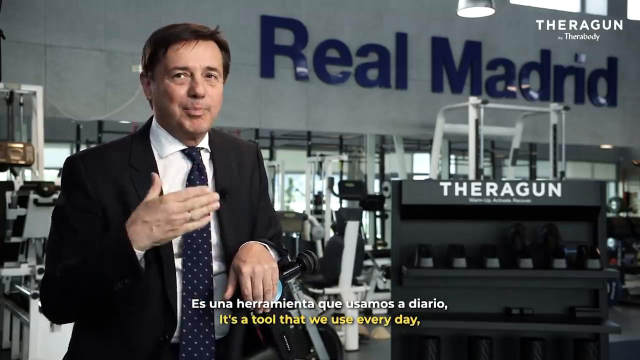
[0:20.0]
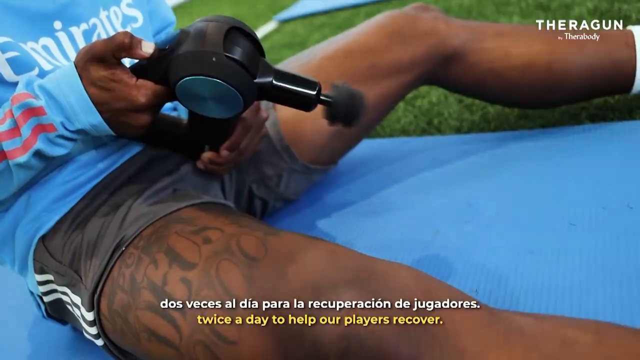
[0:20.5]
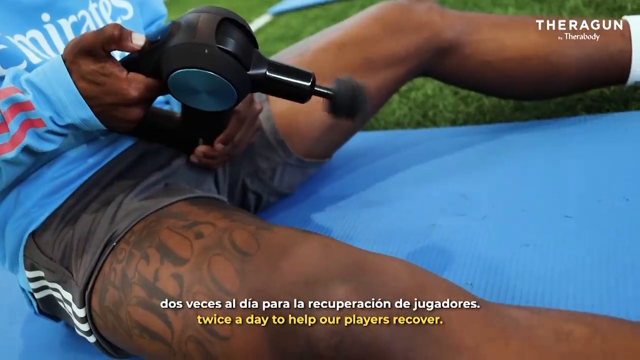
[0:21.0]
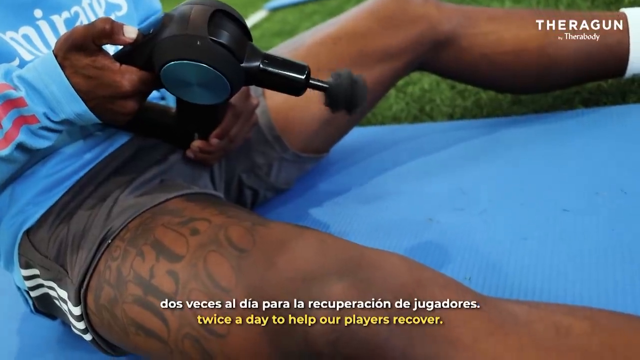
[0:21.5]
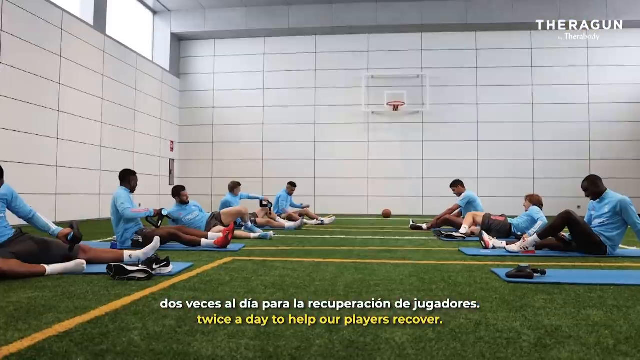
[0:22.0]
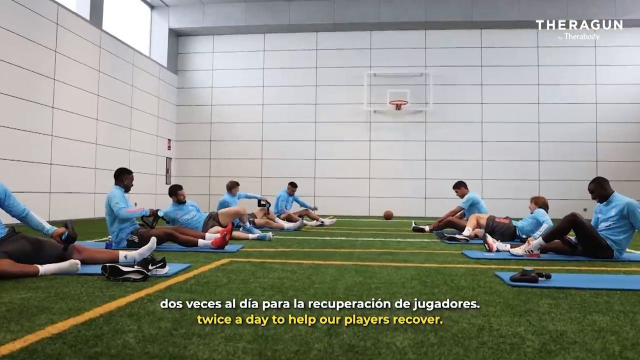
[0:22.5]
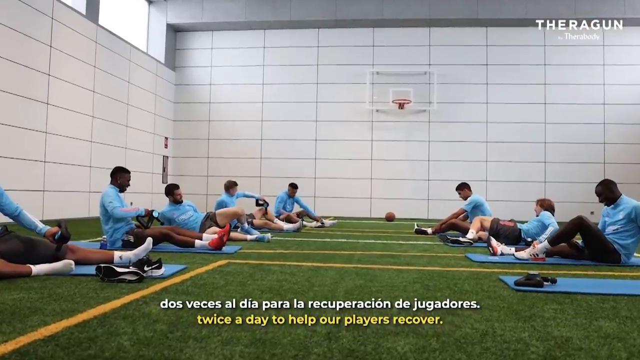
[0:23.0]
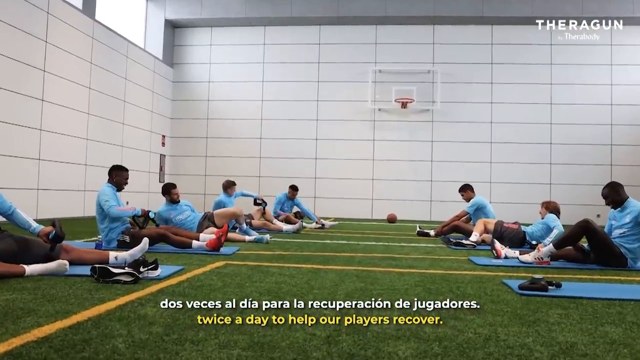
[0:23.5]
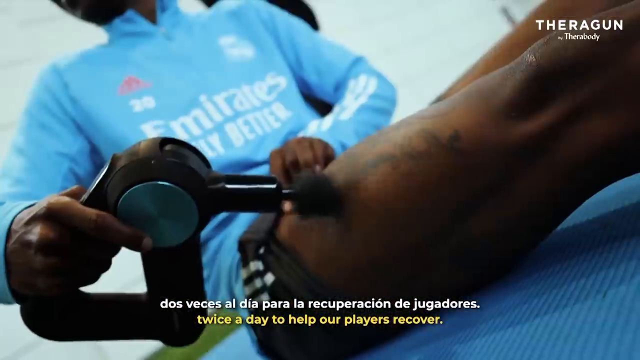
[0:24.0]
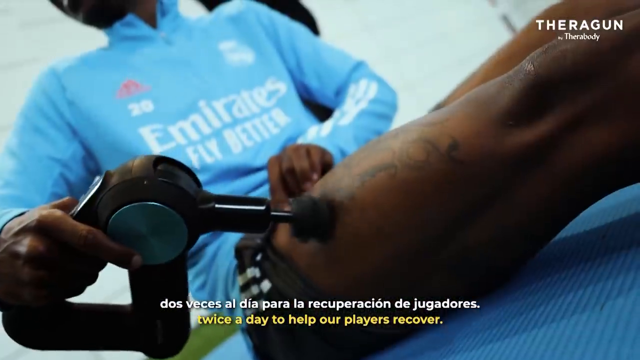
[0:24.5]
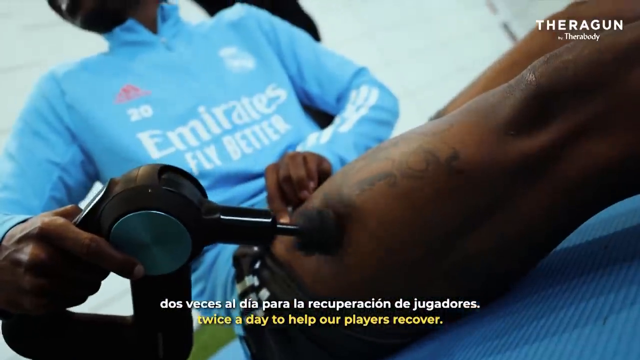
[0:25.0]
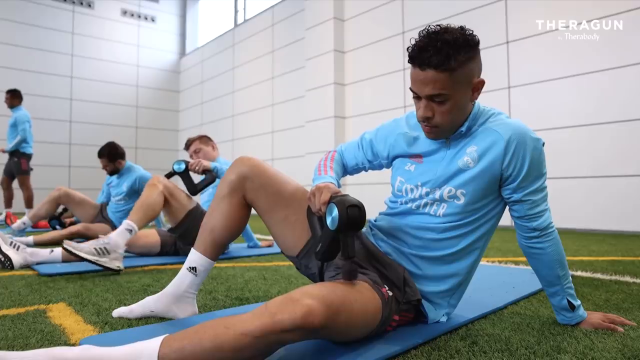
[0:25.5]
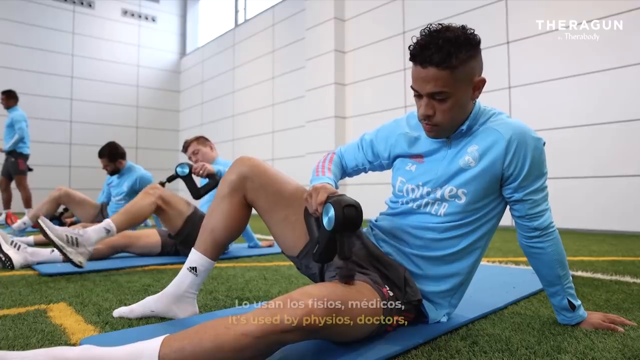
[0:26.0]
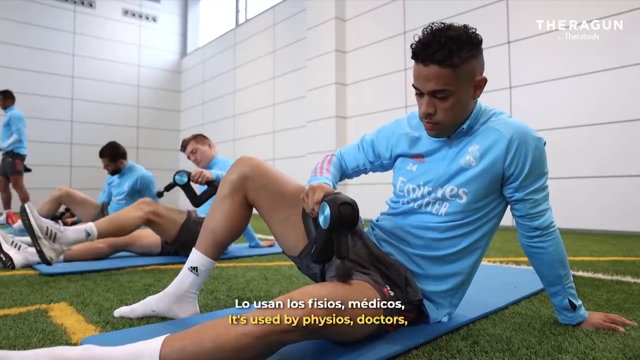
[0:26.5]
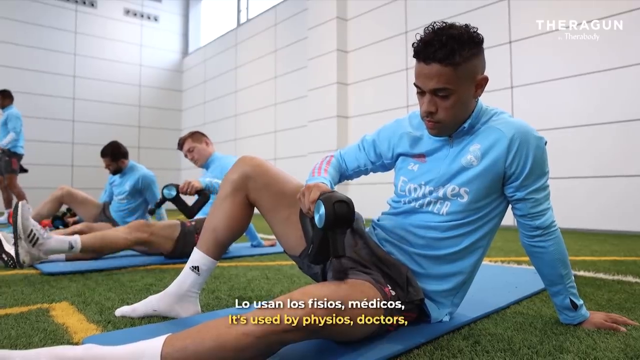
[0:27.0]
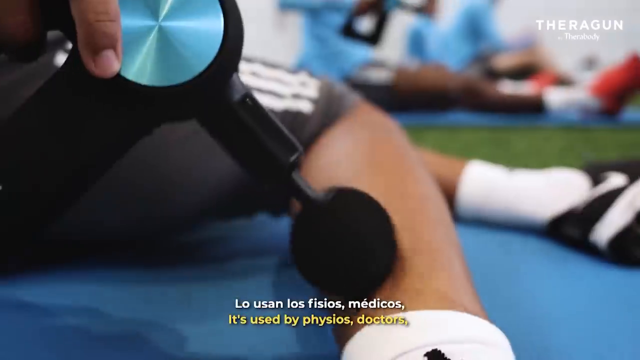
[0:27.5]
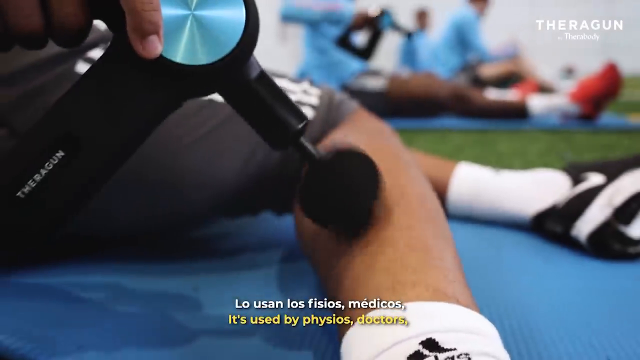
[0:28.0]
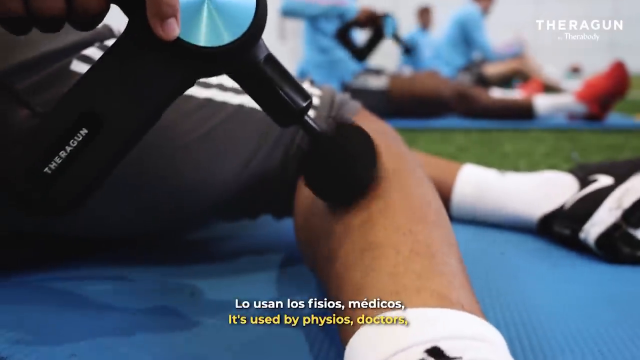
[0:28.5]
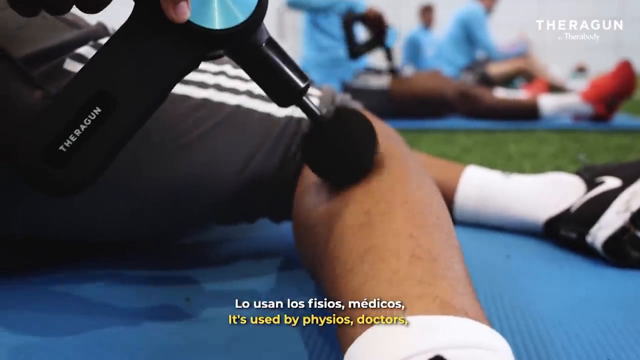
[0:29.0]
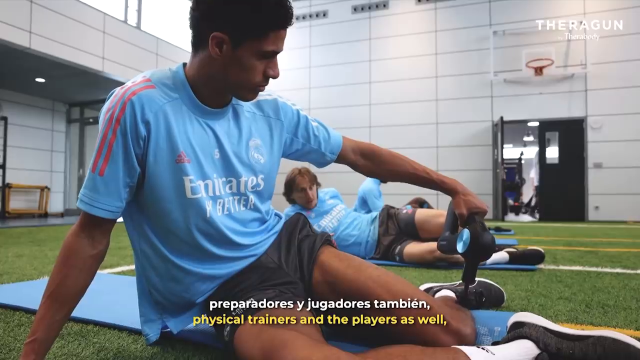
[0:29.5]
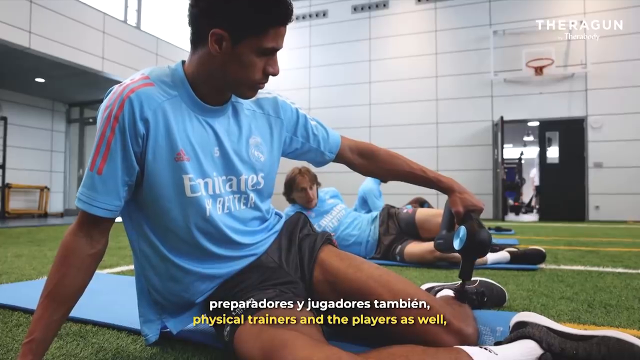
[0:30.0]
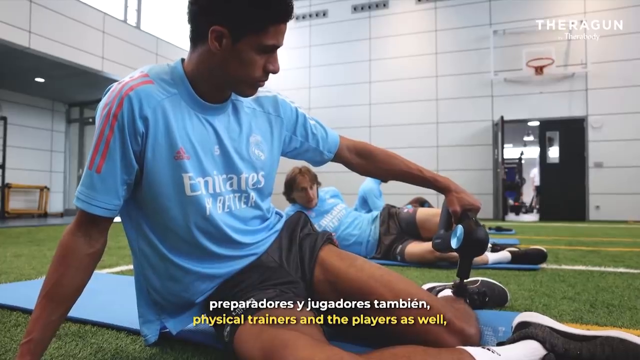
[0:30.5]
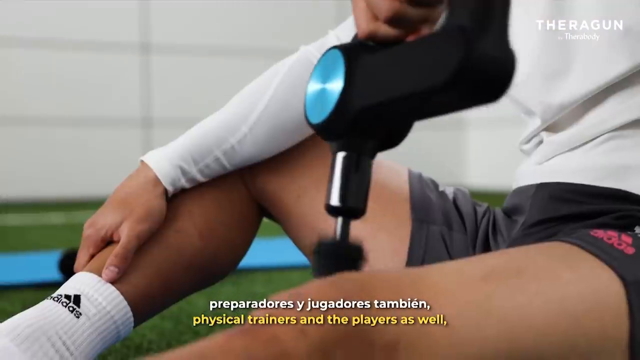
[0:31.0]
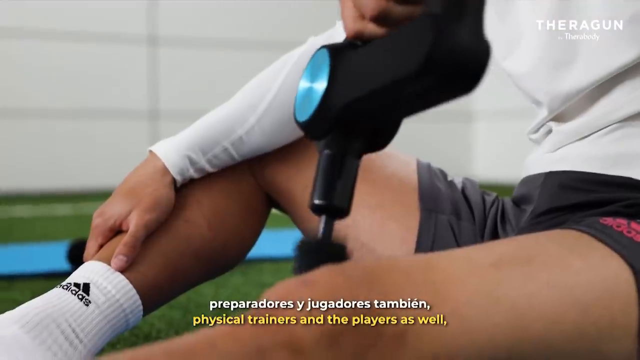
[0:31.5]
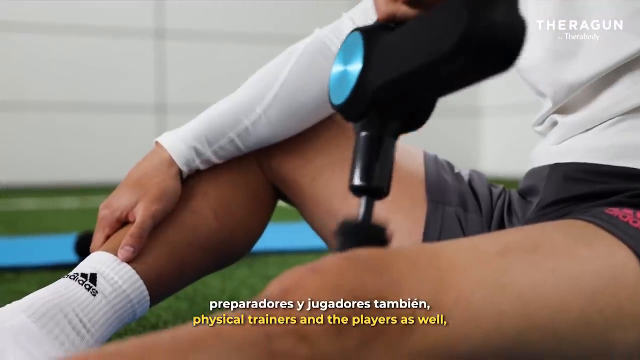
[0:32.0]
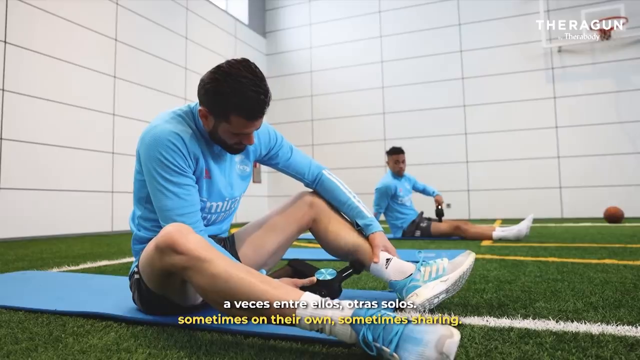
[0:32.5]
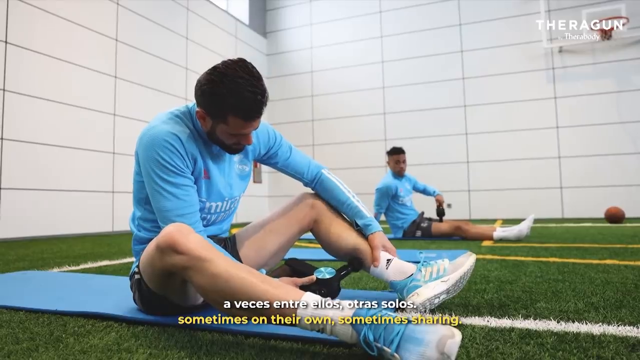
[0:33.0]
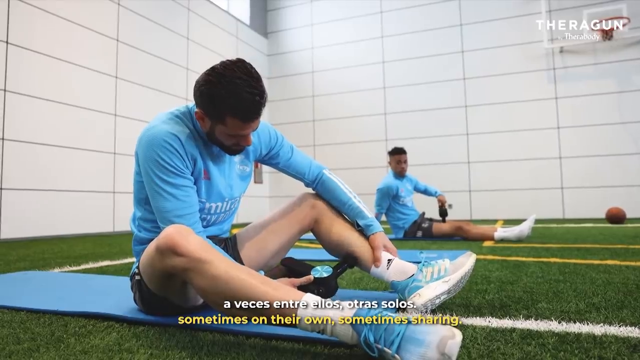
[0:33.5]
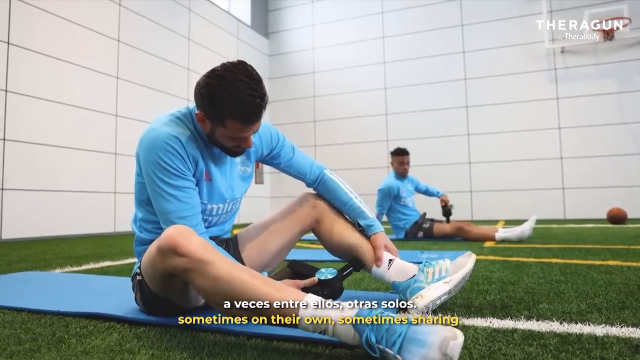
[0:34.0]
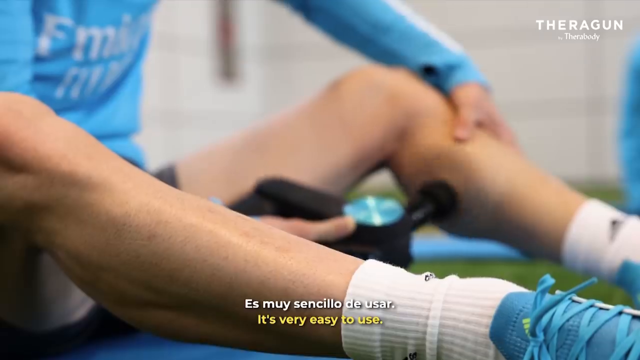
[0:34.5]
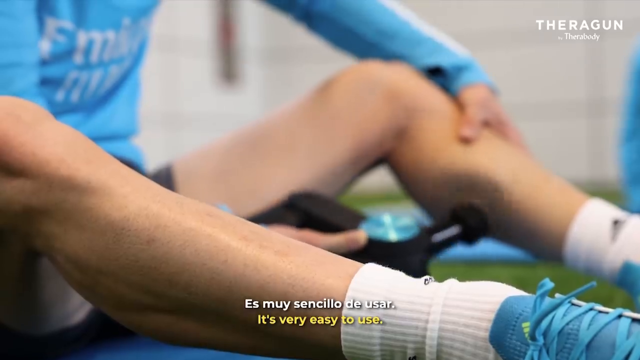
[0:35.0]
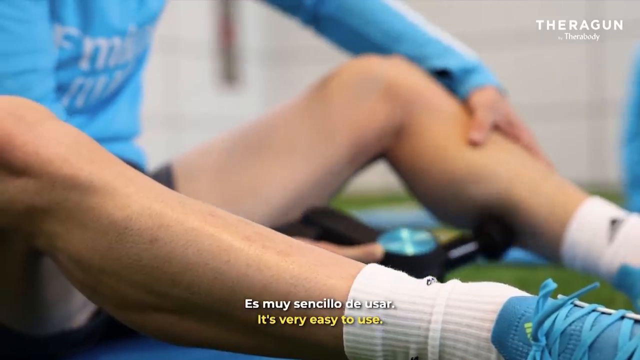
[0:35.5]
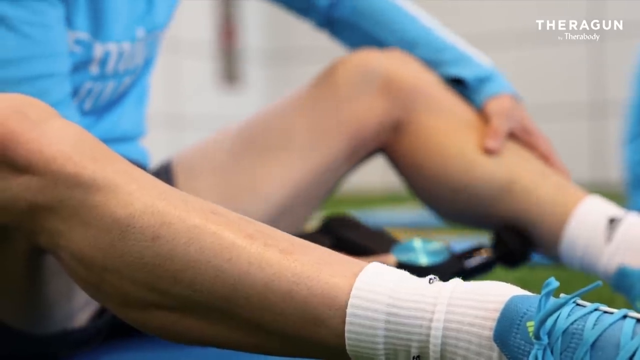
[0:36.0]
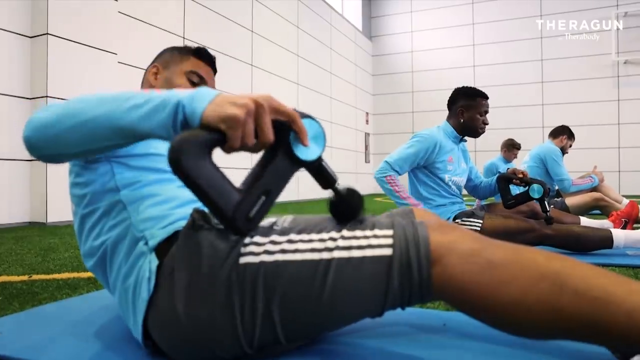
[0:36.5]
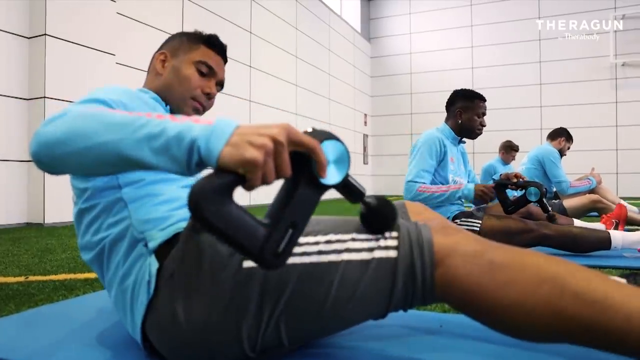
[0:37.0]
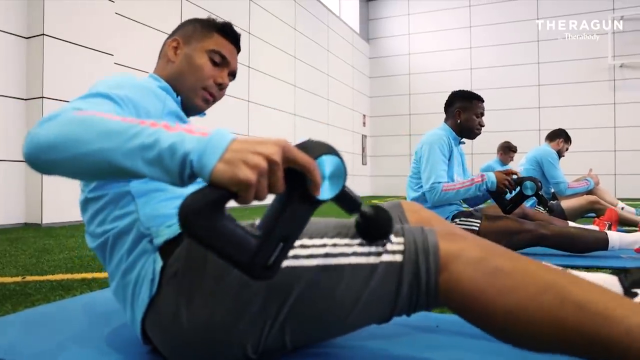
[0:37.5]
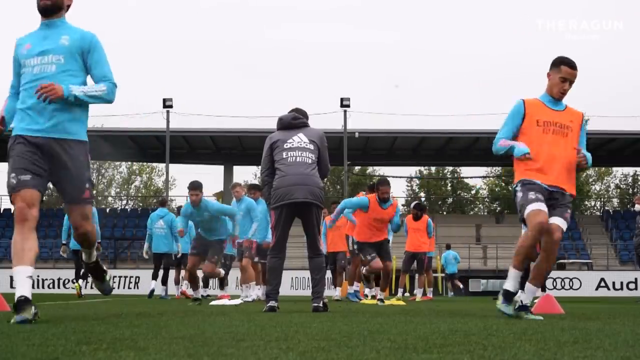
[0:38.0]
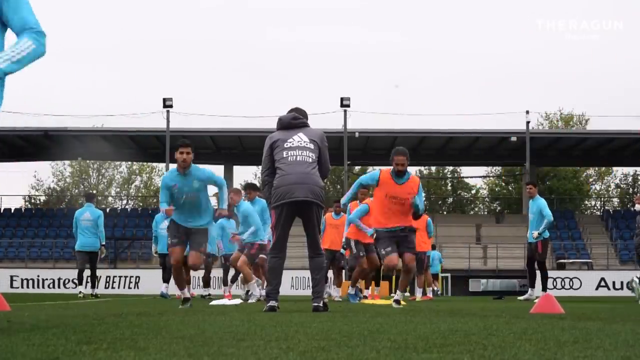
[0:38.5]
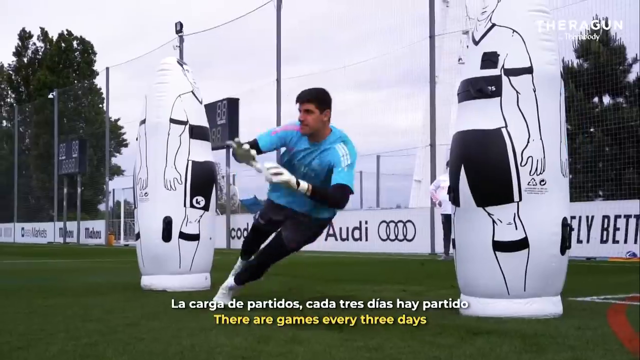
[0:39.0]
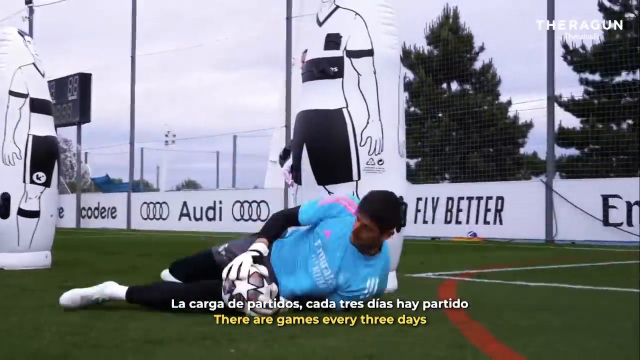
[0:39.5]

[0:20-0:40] A clean-shaven man with brown hair wears a blue tie with white dots, a white dress shirt and a black jacket. His right hand is over the middle of his chest, palm facing his chest, thumb pointing up and fingers pointing out. His left wrist is curled slightly and appears to be holding the Theragun. Weight machines are in the background, the words "Real Madrid" are on a wall behind him in blue letters, and to his left is something that reads "Theragun". A player holds the Theragun with the fingers of his right hand, thumb on the trigger, and his left hand holding the front, and the Theragun pumps up and down. Players stretch on two sides of the field, with a basketball court also visible; most have their legs outstretched and hold the Theragun on one leg, usually what looks like the left leg. One player puts it on his right leg: the fingers of his left hand point down on the very top of his right thigh while his right hand holds the handle and presses the trigger, and the Theragun bumps up and down on his leg. Another player has his right leg on the ground and bent upward and his left leg lying flat and stretched out, and he holds the Theragun in his right hand, pressing the trigger as it moves up and down on his leg. Another player massages his calf with the Theragun, his right leg slightly bent with the calf facing inward; the same player is then seen from a different point of view, still massaging his calf. A player in white has his right leg slightly bent and turned, his right arm hanging and holding onto his right leg, outstretched on it, while his left hand holds the Theragun and massages his left leg. Another player has his left arm close to the bottom of his shin, his left foot turned and both legs bent, and massages the back of his calf with the Theragun. A player next to him has both legs stretched out and uses his left hand to massage his left upper calf with the Theragun. A group of players, one in all blue on one side and one in all blue with orange shirt sleeves on the other, first face sideways doing slides, then face forward and sprint. A player in all blue jumps in front of a ball and catches it with both hands.